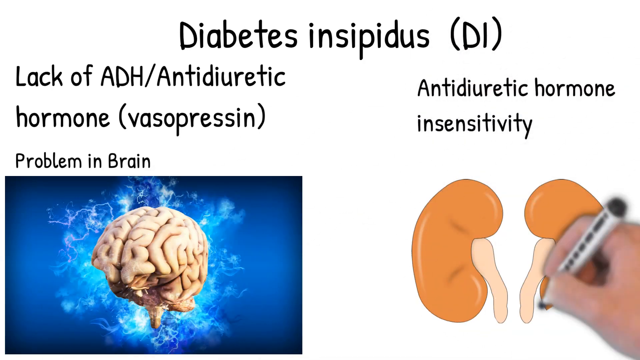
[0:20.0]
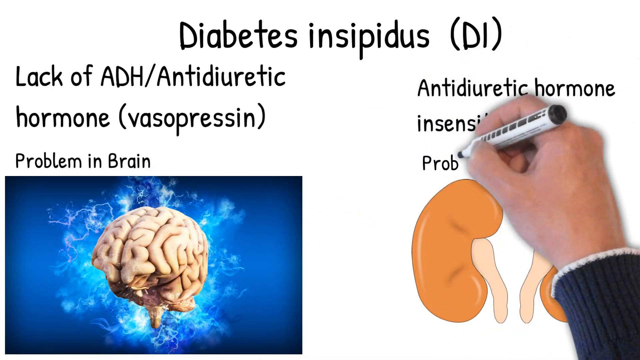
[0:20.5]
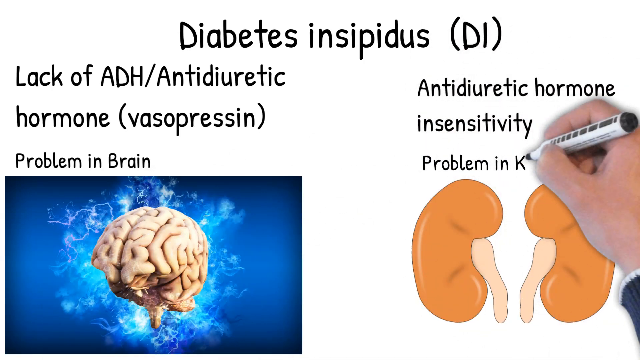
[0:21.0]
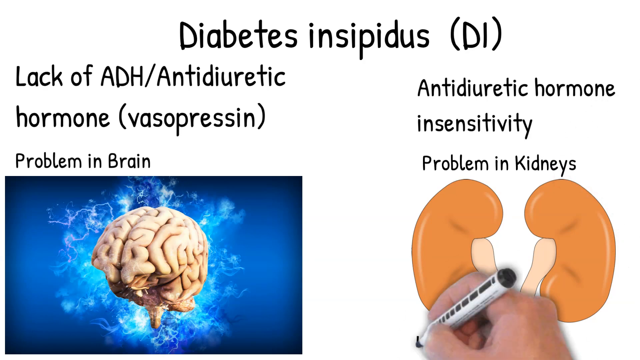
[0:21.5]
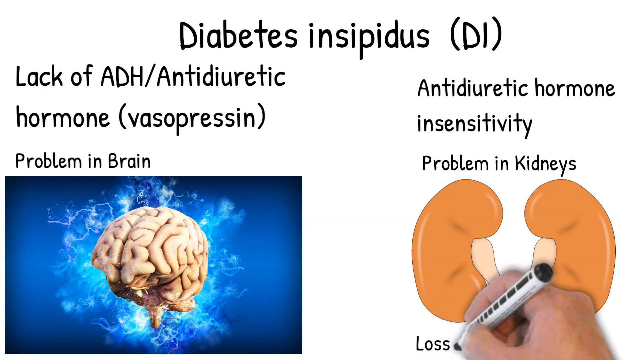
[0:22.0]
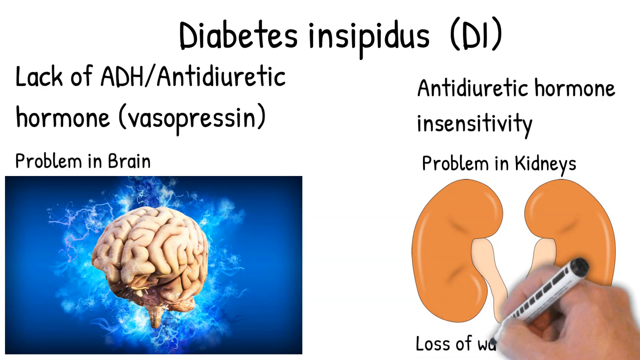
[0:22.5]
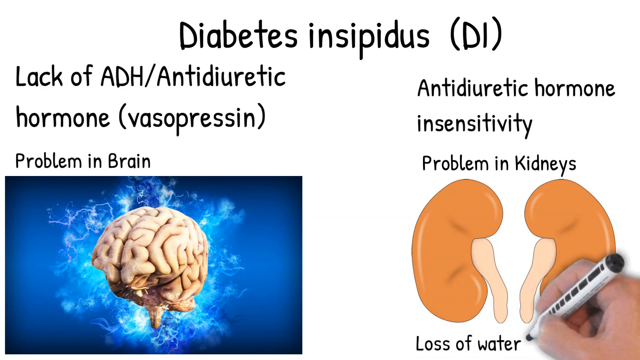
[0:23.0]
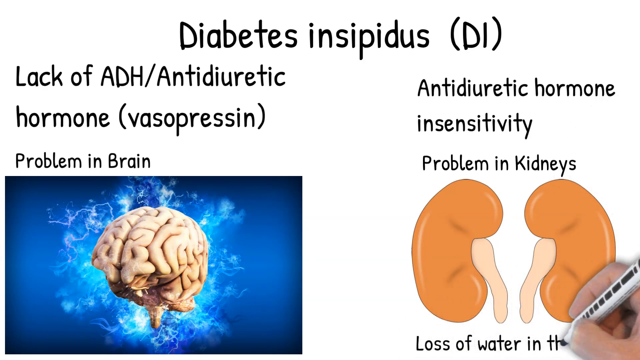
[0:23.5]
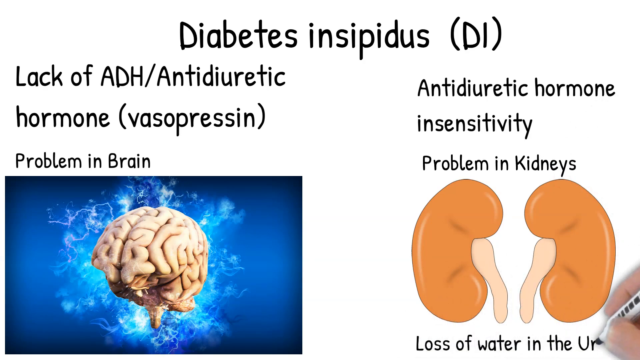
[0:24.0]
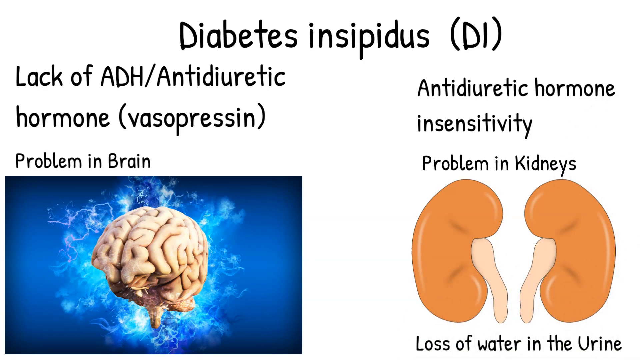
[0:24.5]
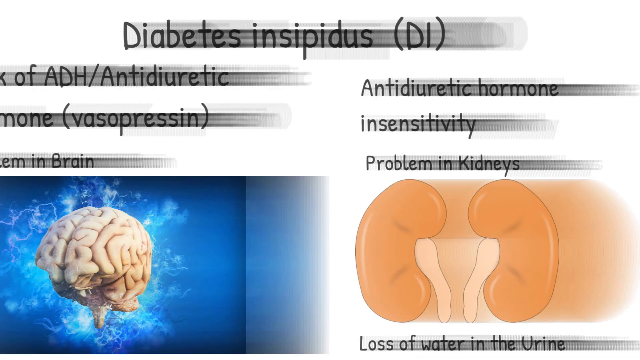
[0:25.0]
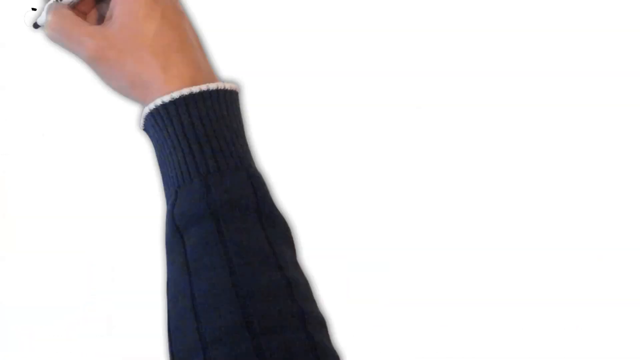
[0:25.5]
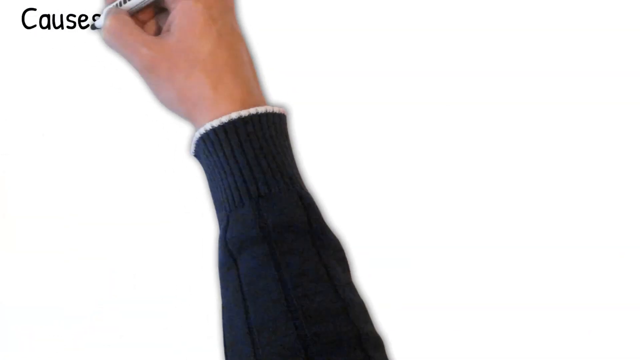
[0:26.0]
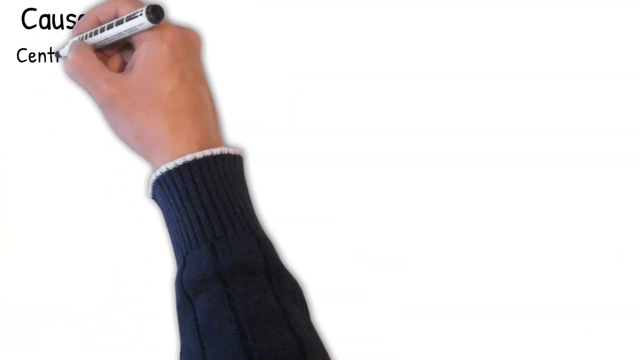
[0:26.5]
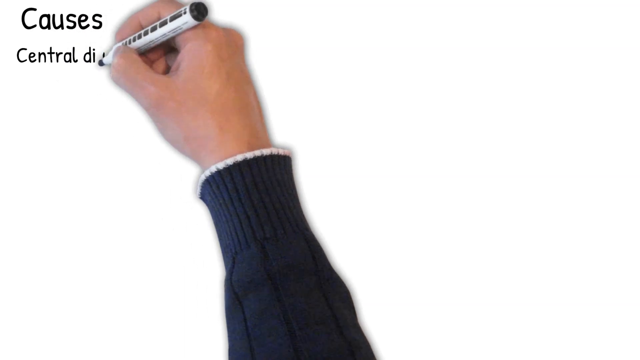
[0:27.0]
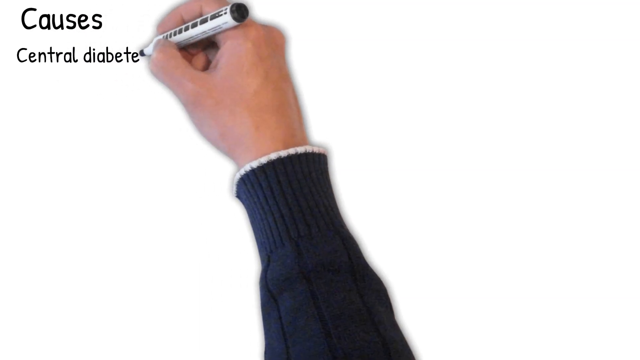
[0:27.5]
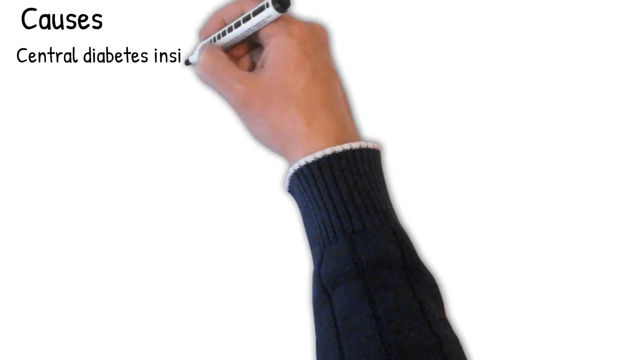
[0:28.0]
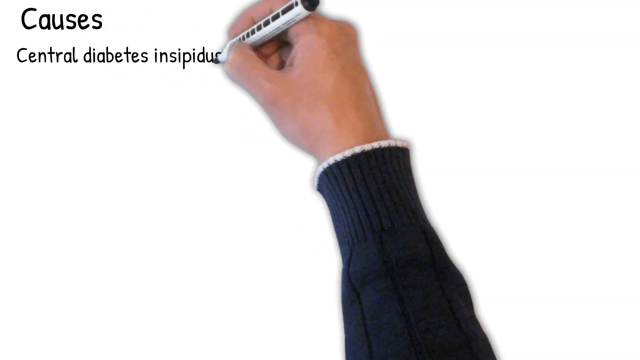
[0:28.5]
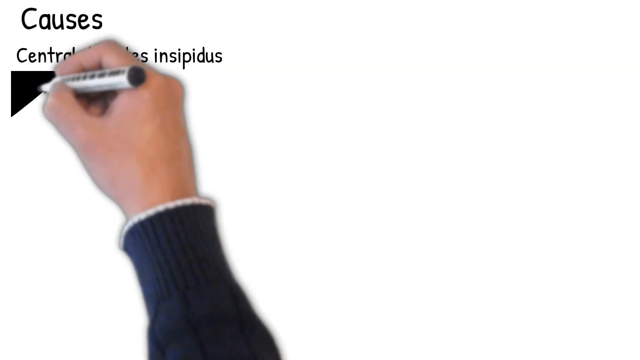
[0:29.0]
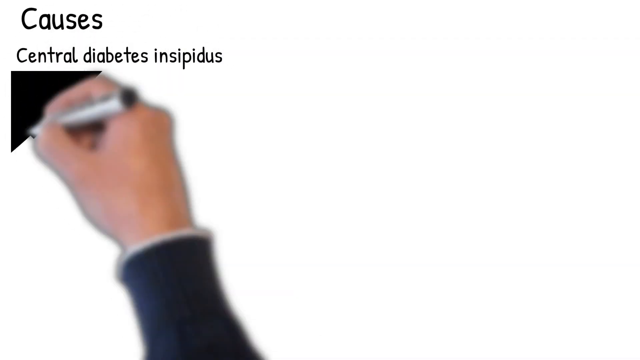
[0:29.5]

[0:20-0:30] On the same screen with the anti-diuretic hormone insensitivity artwork, the man draws what looks like two orange organs. He writes "problem in kidneys, loss of water in the urine." In the next shot he writes "causes," then "central diabetes insipidus," and quickly starts drawing something for it, which is unfinished as the shot ends. He wears a dark blue long-sleeve shirt with a white border around the edge of the wrist.